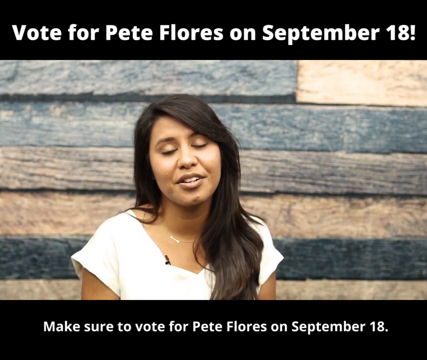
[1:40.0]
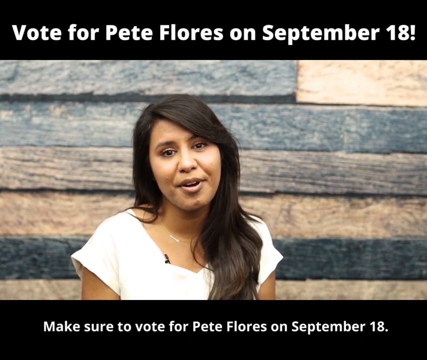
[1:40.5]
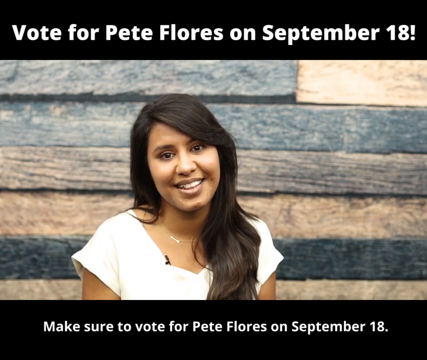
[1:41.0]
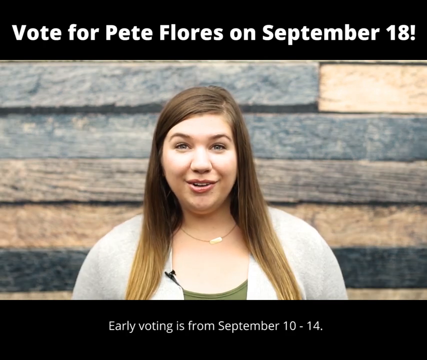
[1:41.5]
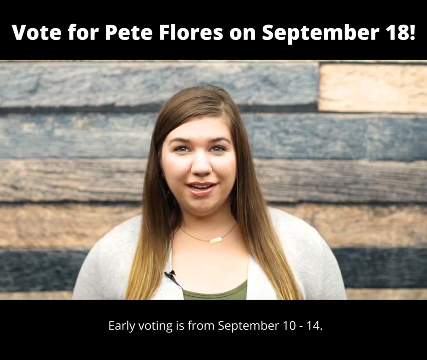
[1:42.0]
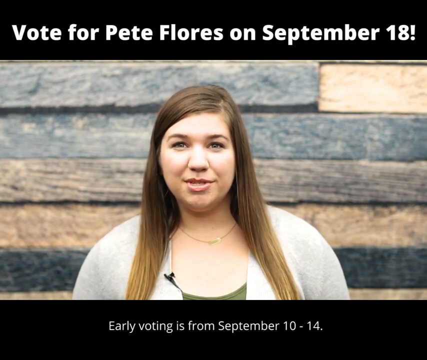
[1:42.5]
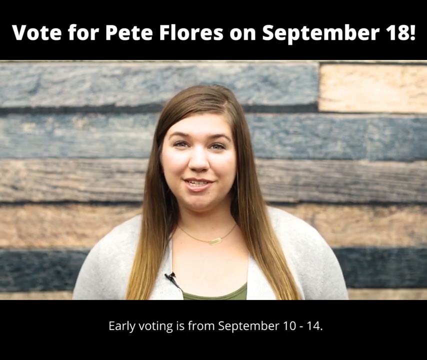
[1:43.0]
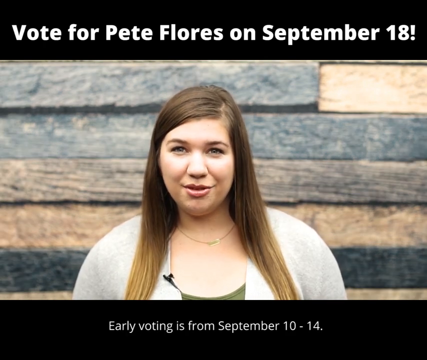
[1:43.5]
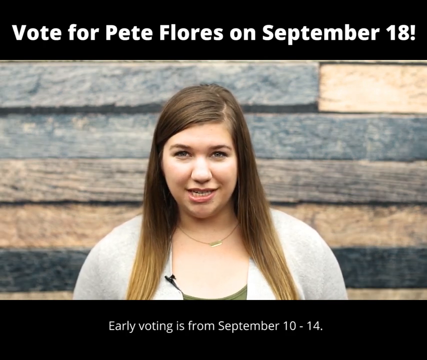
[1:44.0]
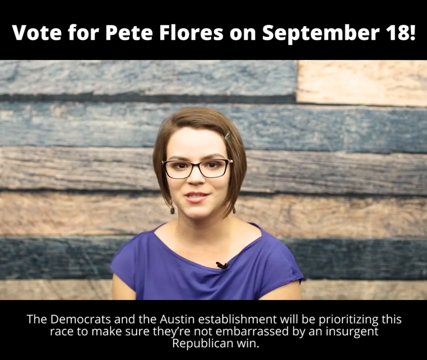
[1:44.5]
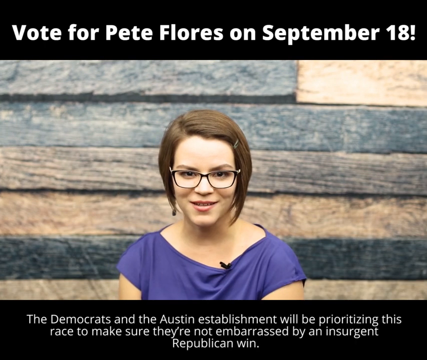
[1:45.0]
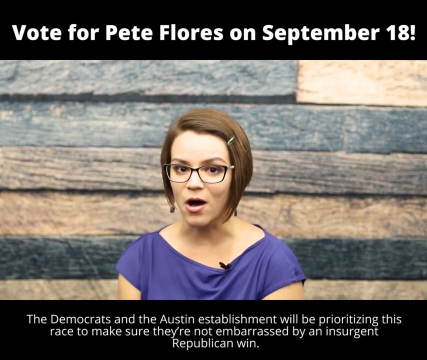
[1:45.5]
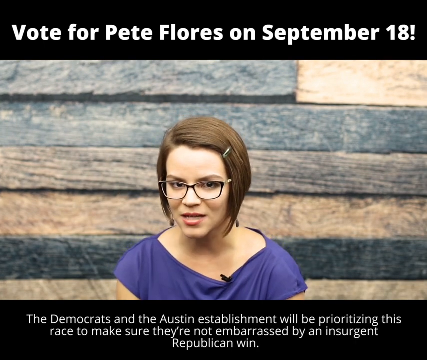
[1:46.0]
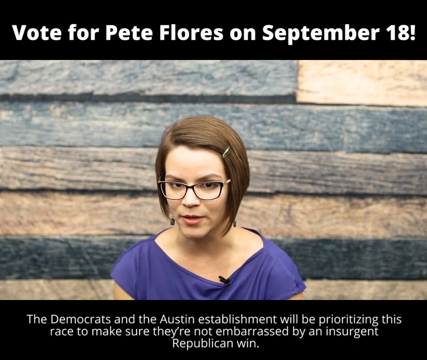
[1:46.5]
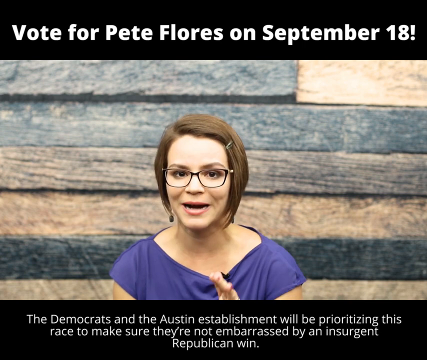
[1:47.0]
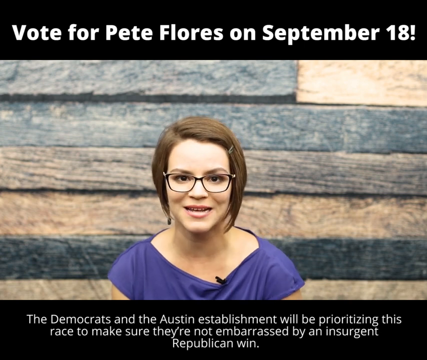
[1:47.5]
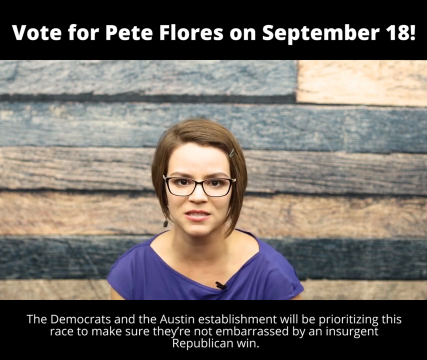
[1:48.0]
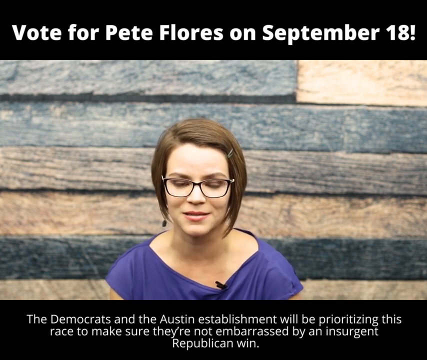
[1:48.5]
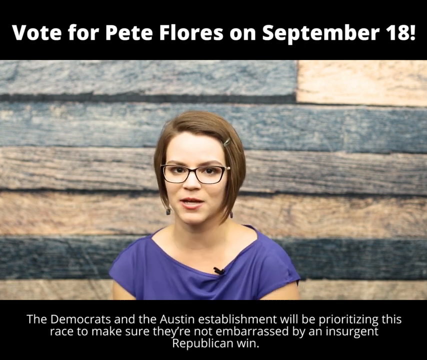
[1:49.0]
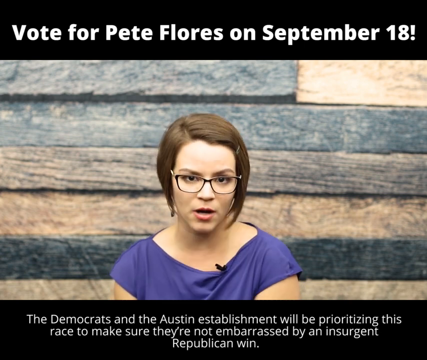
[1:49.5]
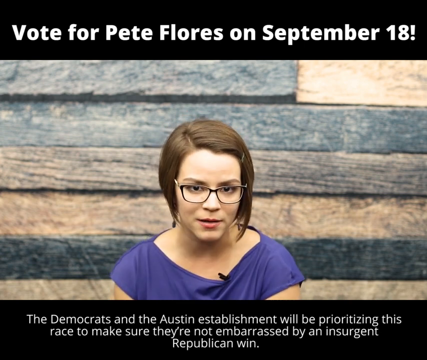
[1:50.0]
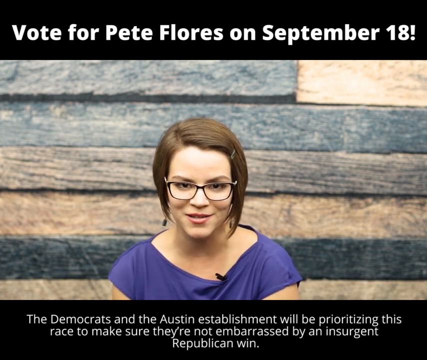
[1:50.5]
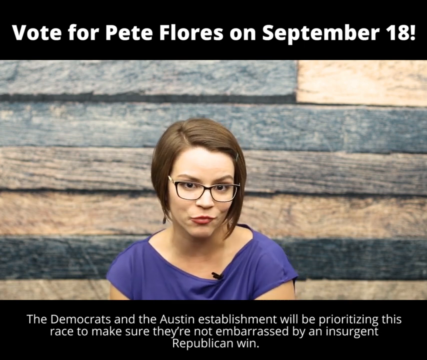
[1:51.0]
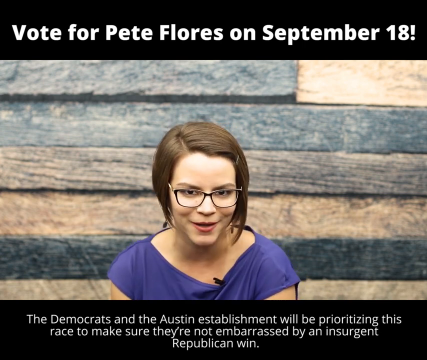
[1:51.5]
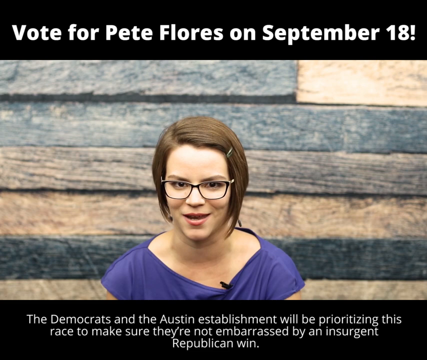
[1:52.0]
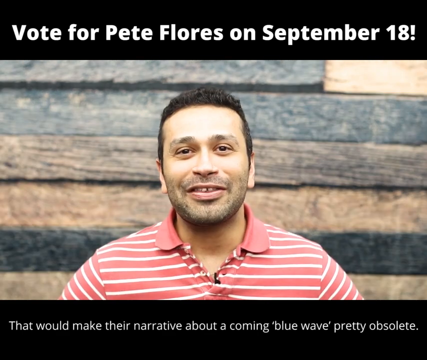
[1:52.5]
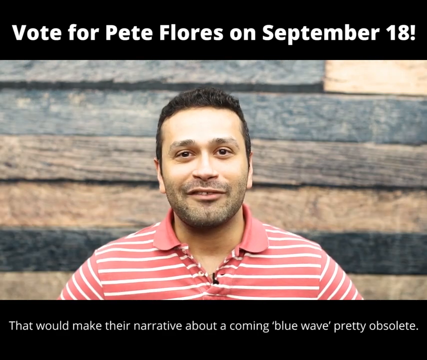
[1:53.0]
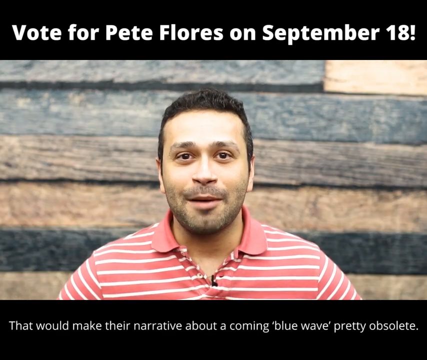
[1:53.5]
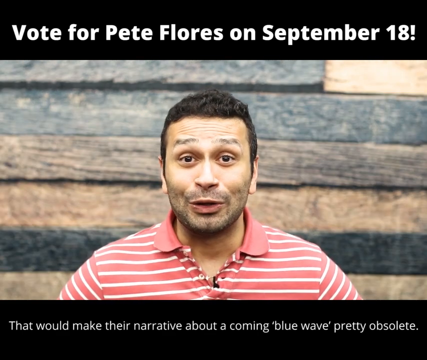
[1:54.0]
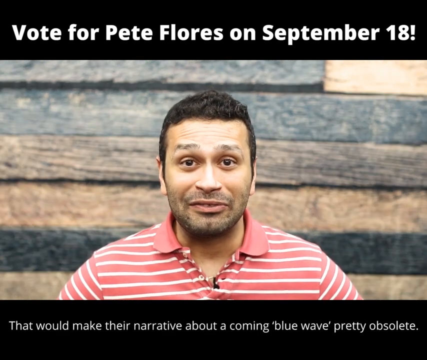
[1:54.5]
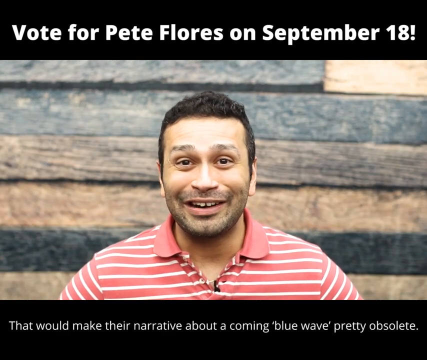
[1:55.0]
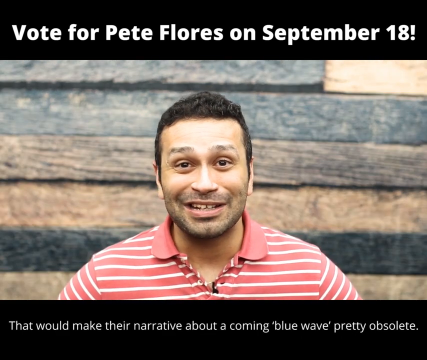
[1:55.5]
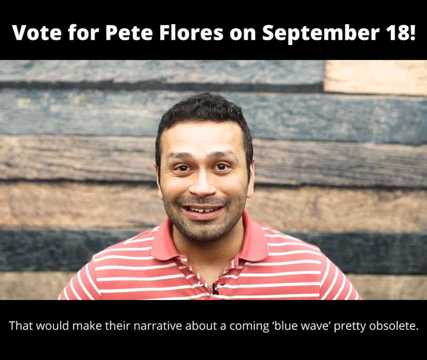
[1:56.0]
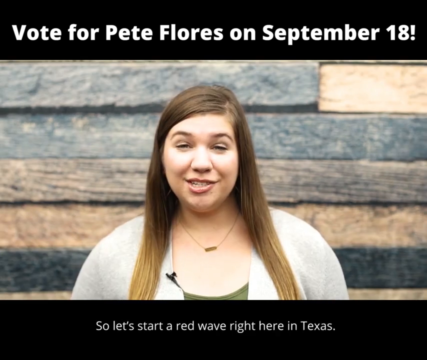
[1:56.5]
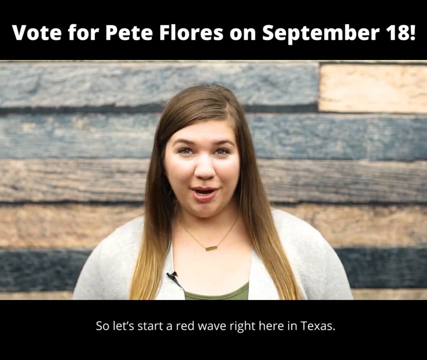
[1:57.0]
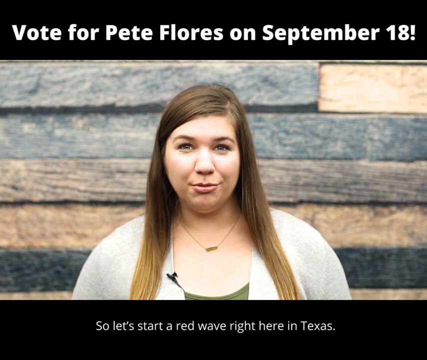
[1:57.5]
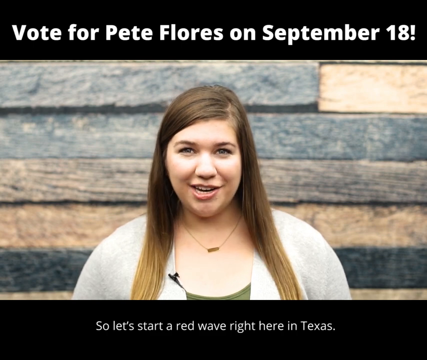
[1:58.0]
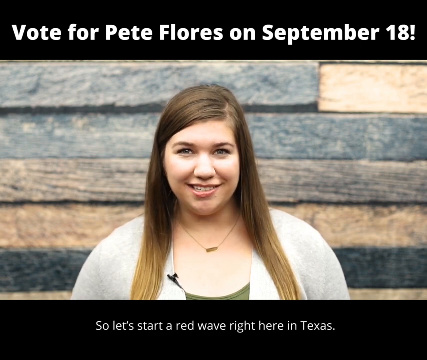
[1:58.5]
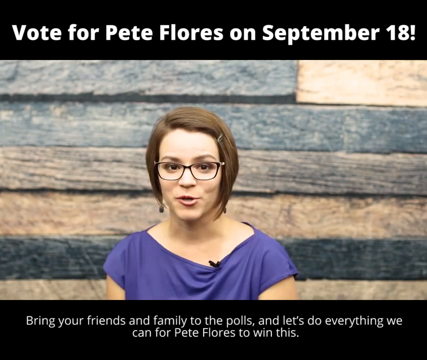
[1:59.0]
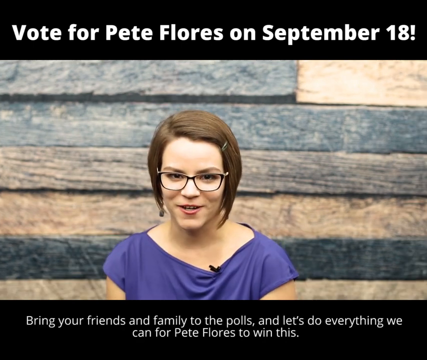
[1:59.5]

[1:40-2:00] A young woman with long black hair stands in front of a wall covered with wooden slats, talking directly to the camera. Words above her head say "vote for Pete Flores on September the 18th", and words underneath her say "make sure to vote for Pete Flores on September the 18th." A different young woman appears; she has long brown hair, wears a long white top with a green t-shirt, and has a gold chain around her neck. The words underneath change to "the Democrats and the Austin establishment will be prioritising this race to make sure they're not embarrassed by an insurgent Republican win." Next, a young woman with short brown hair and glasses, wearing a blue t-shirt and a hair clip on one side of her head, talks to the camera while shrugging her shoulders slightly; the words change to "that would make their narrative about a coming blue wave pretty obsolete." A young man with short black hair in a red t-shirt with white stripes then talks to the camera, smiling and shaking his head, and the words change to "so let's start a red wave right here in Texas." The video goes back to the woman with long brown hair and the white top.